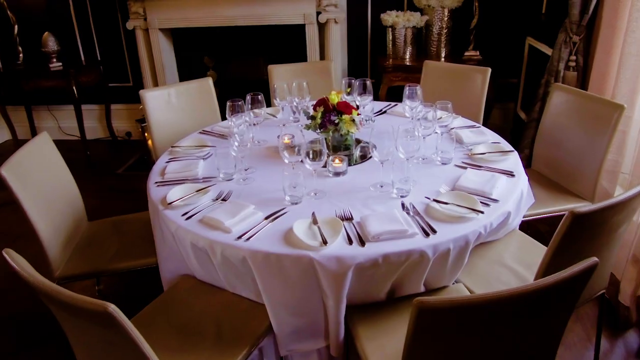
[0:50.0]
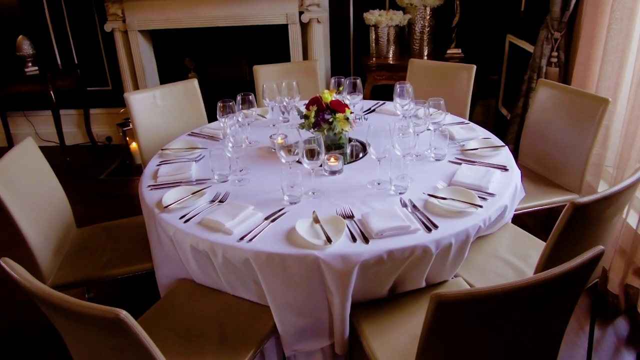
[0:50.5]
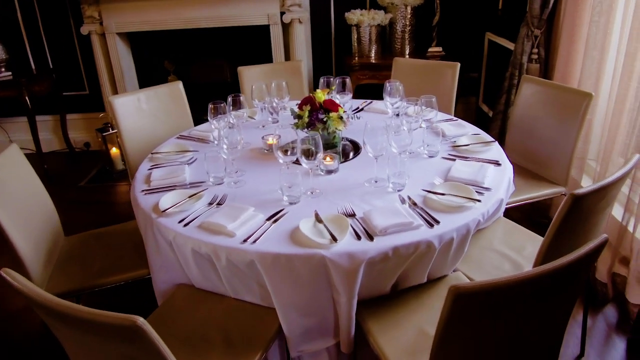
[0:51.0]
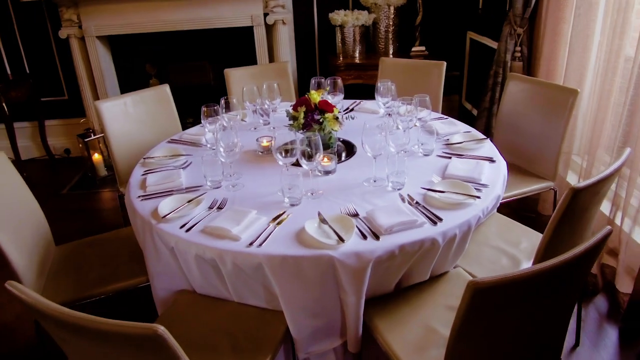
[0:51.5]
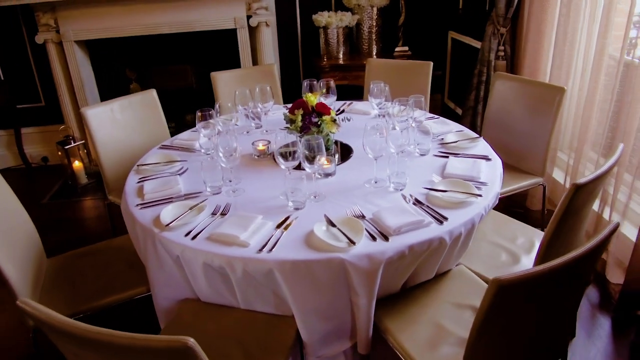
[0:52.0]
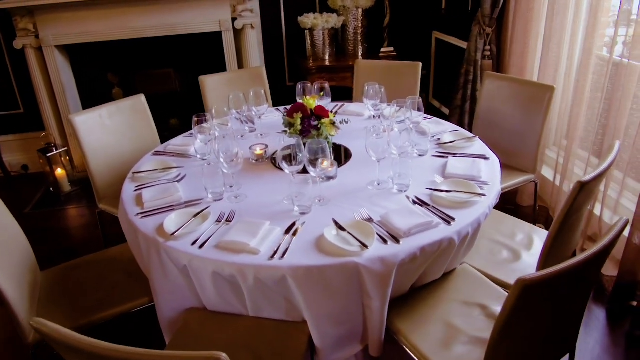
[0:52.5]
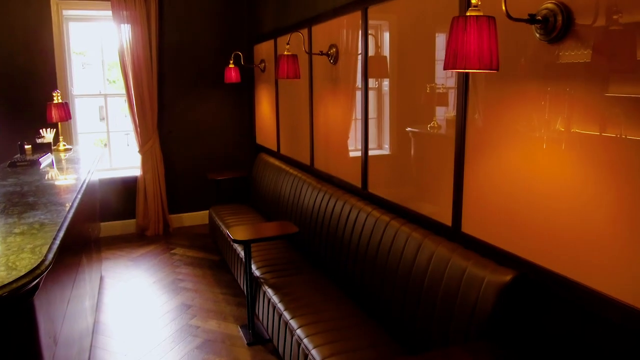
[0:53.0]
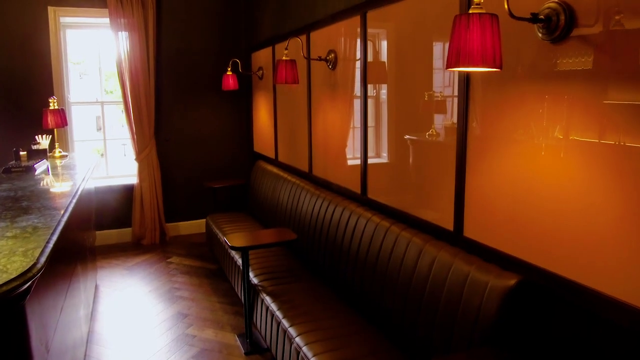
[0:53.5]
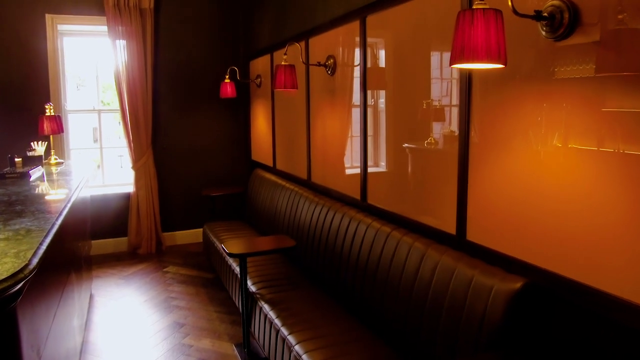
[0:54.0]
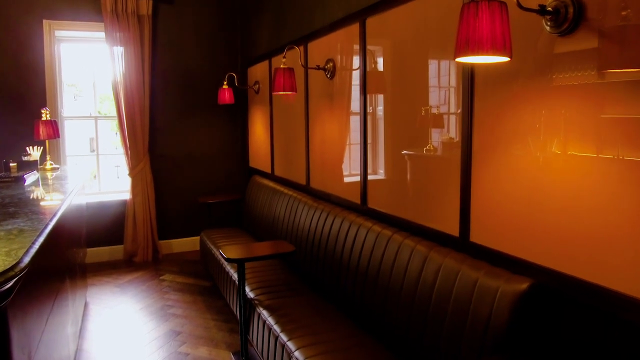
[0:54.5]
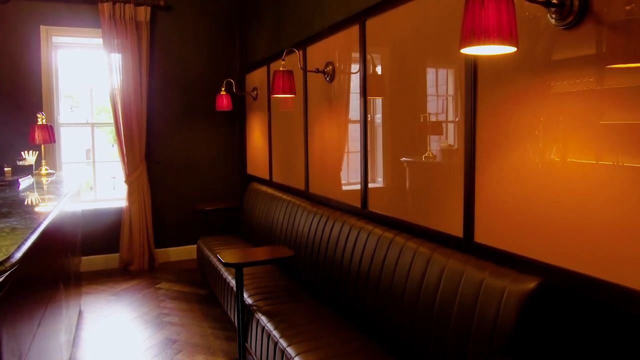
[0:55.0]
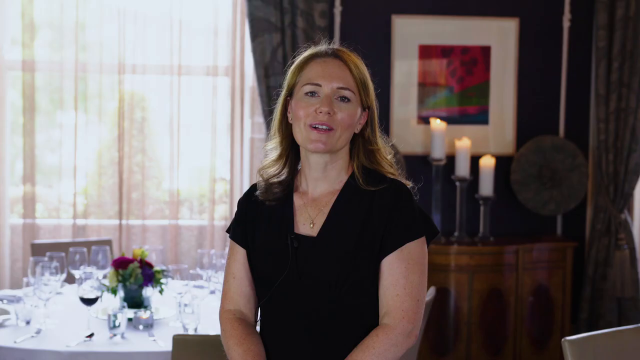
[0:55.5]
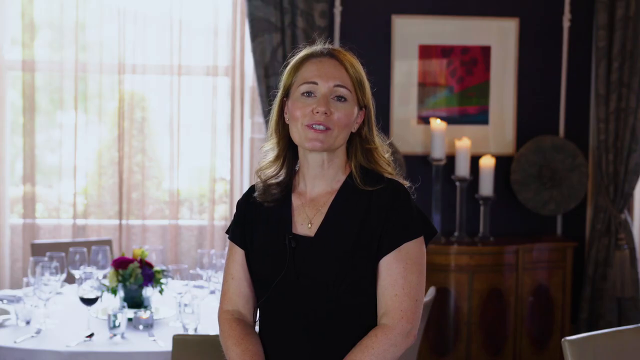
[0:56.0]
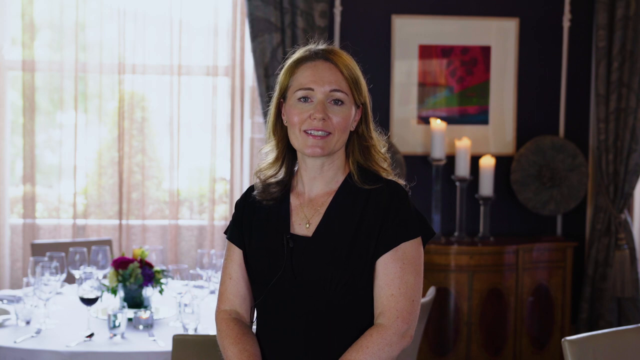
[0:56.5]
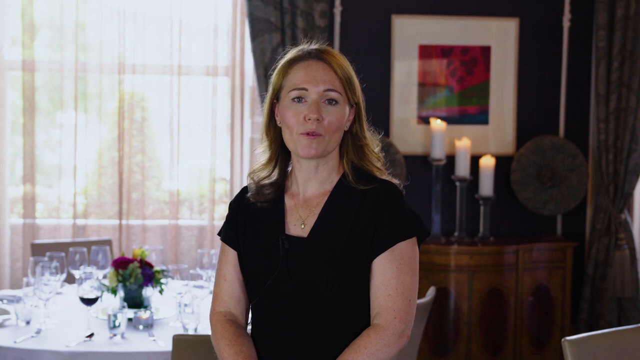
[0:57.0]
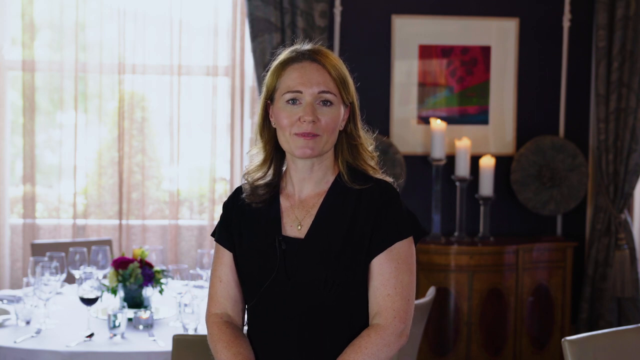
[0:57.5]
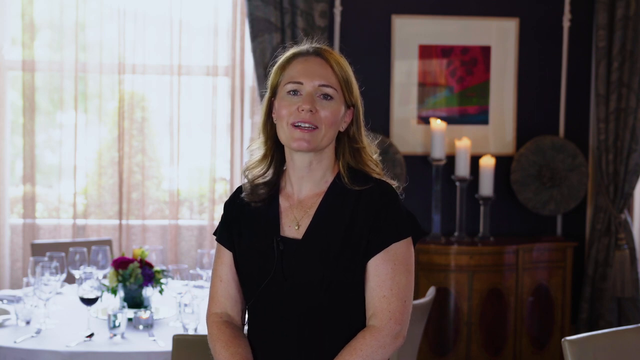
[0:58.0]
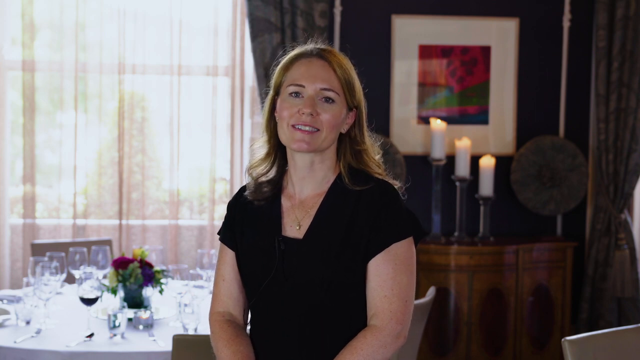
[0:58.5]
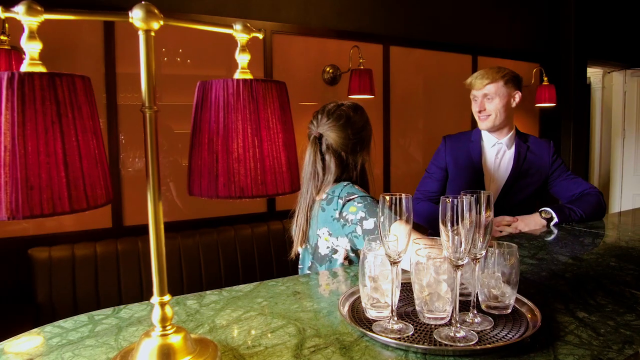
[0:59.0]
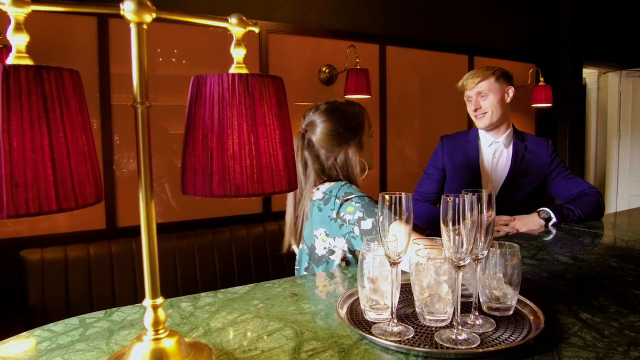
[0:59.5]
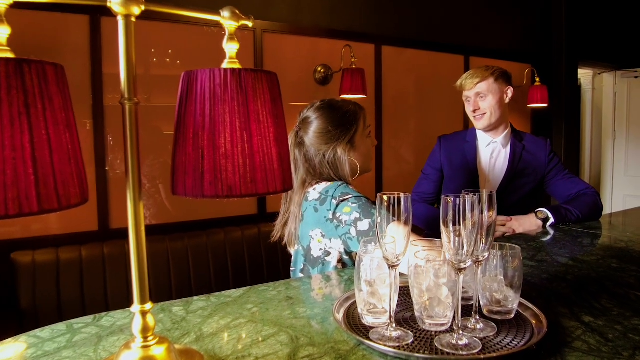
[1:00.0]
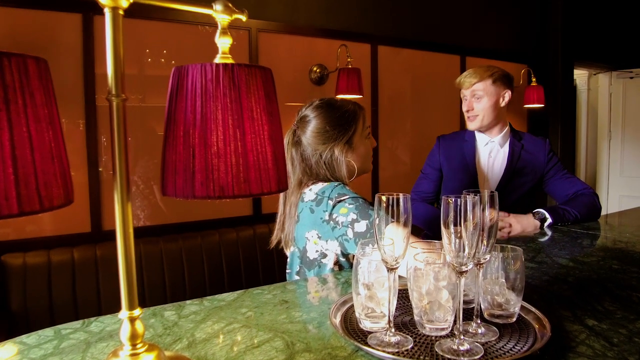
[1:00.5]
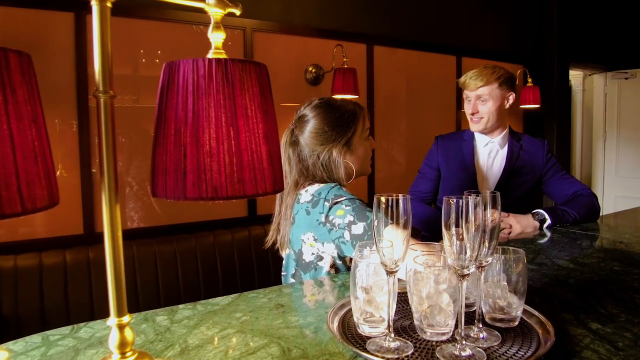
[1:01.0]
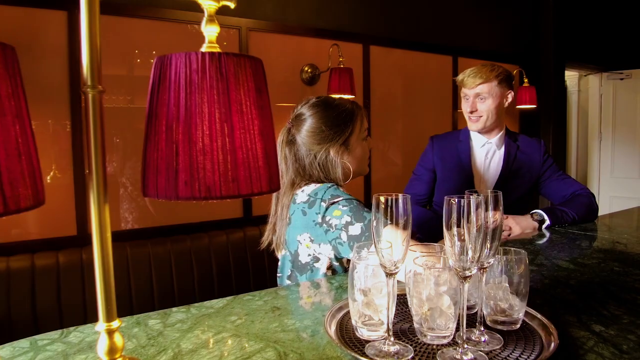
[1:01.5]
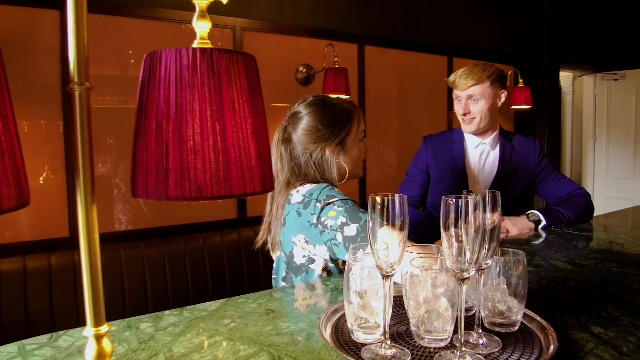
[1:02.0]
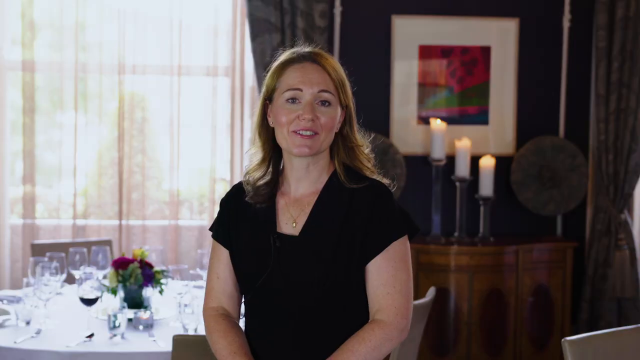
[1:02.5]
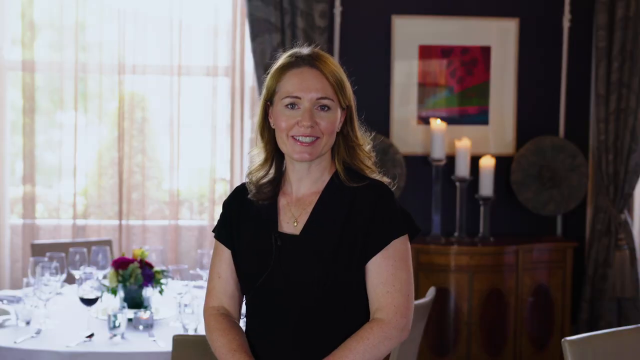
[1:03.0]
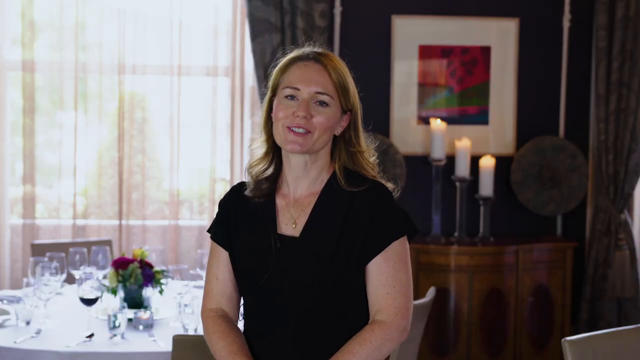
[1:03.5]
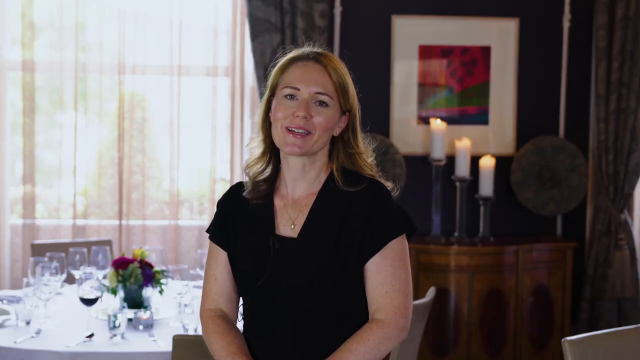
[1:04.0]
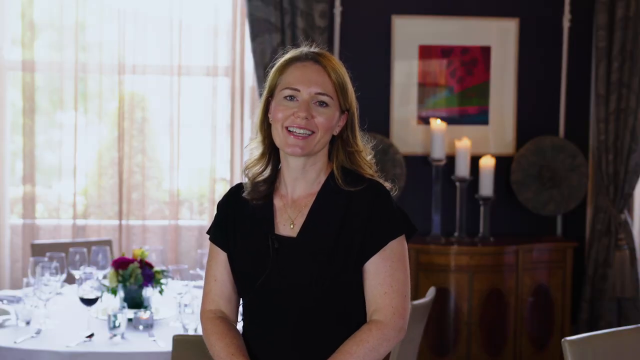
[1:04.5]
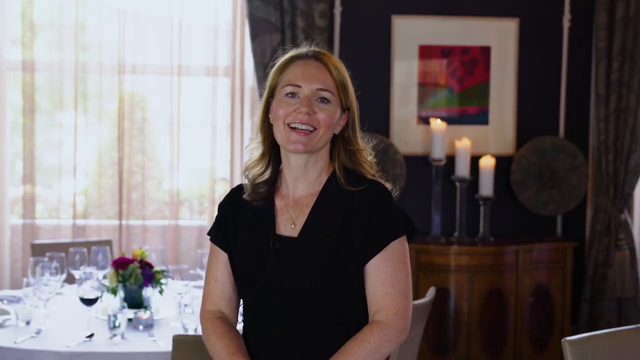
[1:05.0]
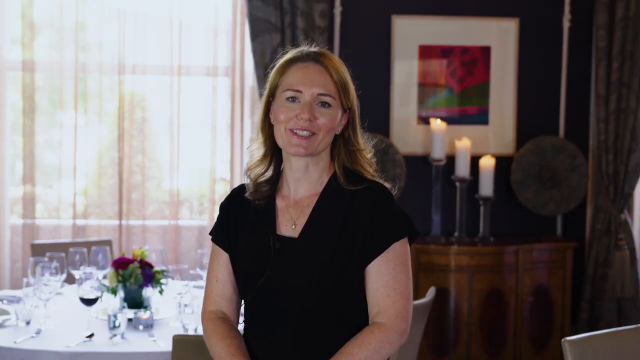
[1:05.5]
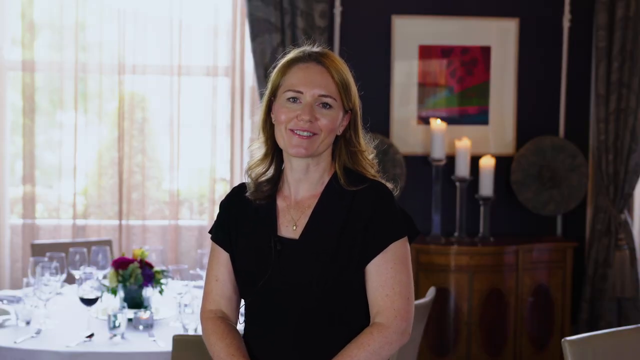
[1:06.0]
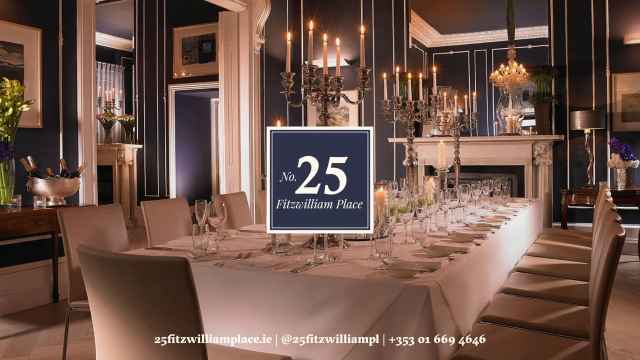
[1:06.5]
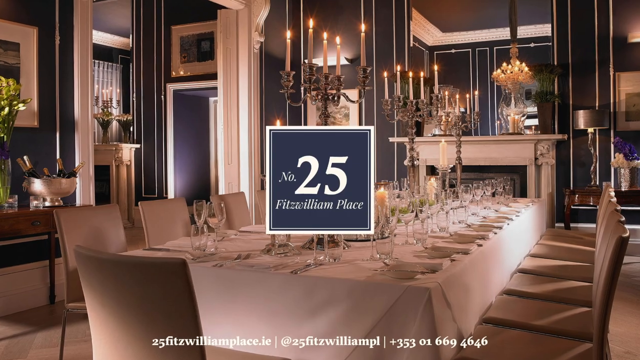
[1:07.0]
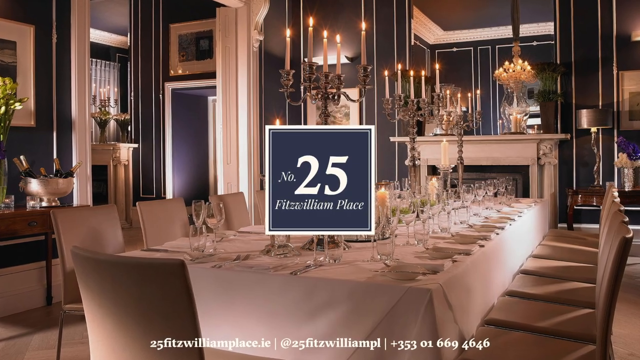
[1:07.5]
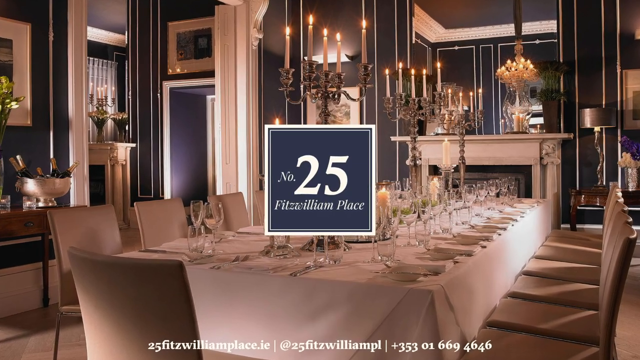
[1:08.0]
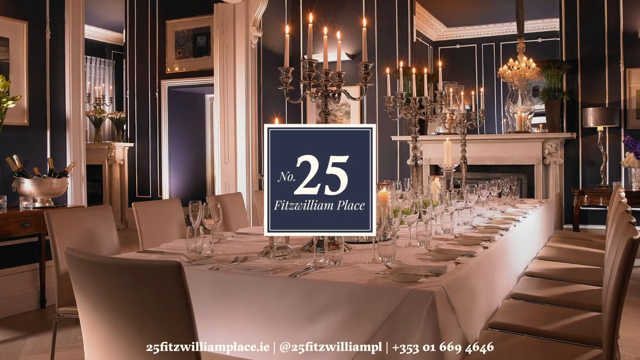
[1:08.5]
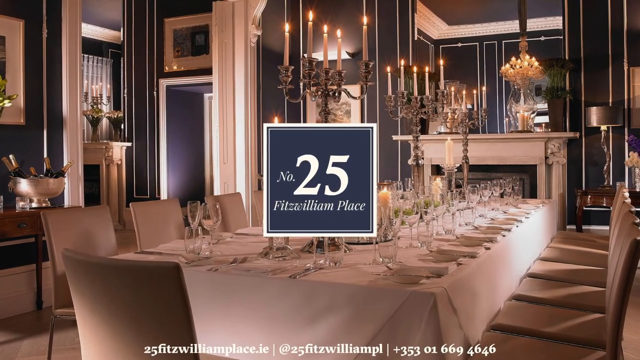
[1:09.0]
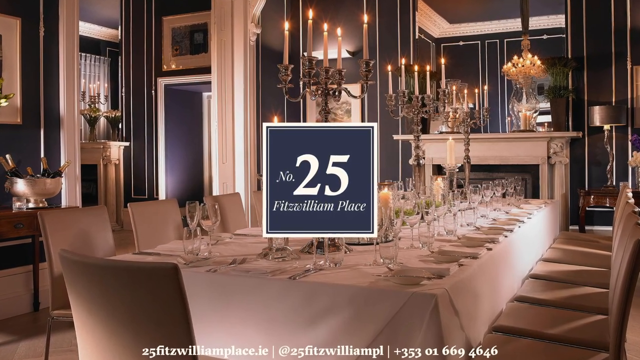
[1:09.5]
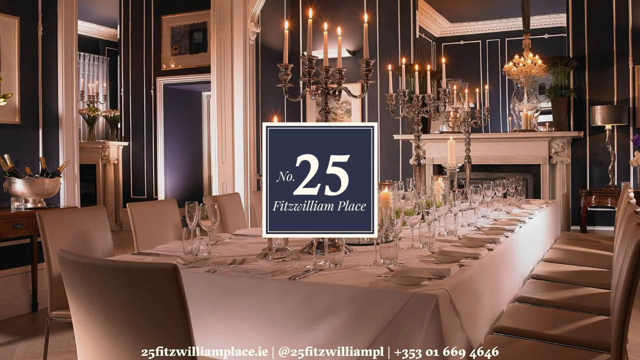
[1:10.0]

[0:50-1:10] The video concludes with the dining area, an open bar, and a lounge area with places to sit. The hotel looks very expensive and exclusive, not new but historic, and it looks like it may have been restored. It does not look like it is in America; it is possibly in Europe.